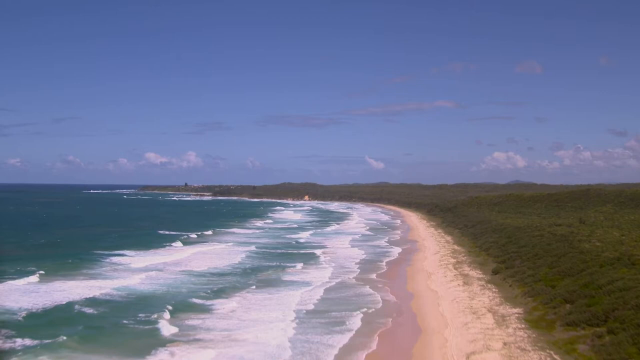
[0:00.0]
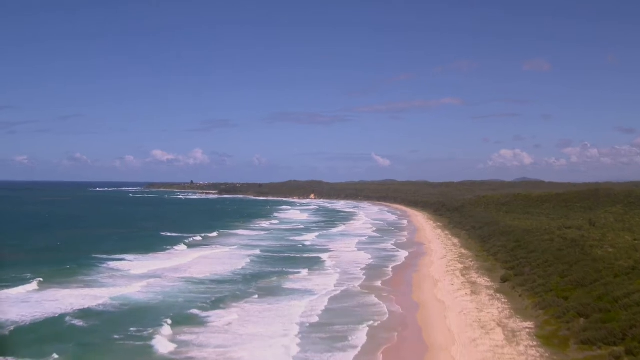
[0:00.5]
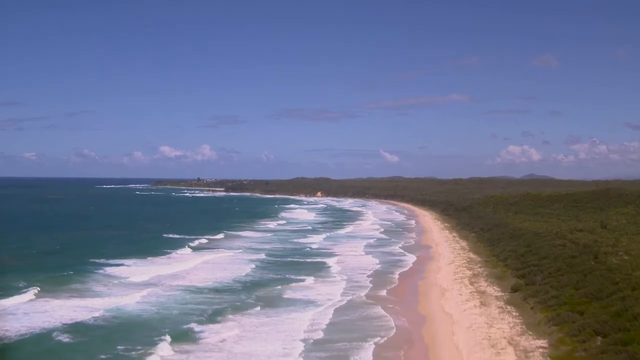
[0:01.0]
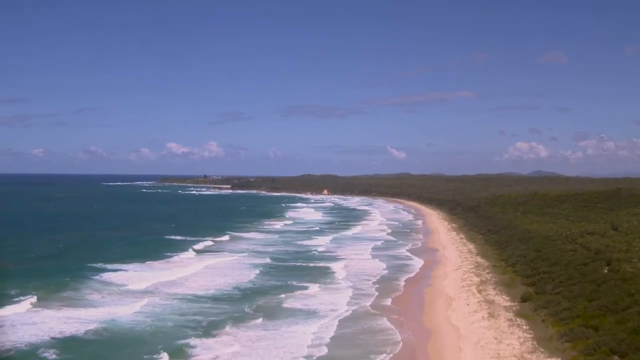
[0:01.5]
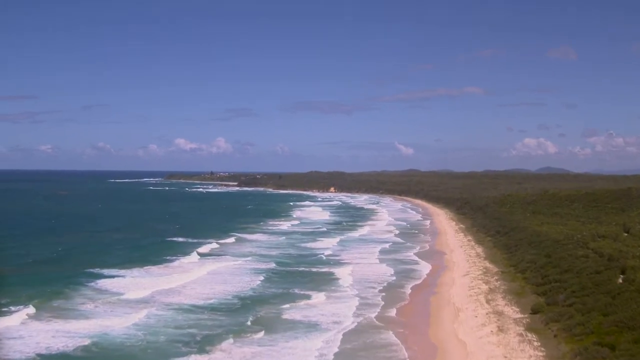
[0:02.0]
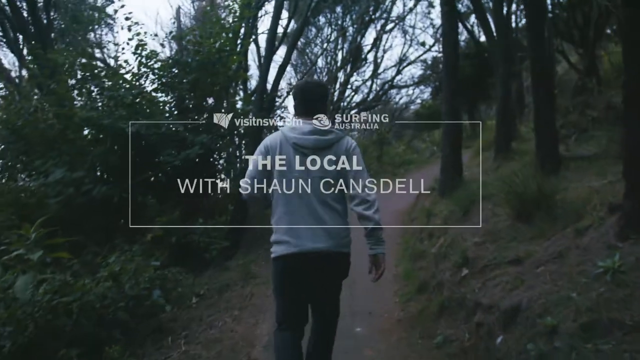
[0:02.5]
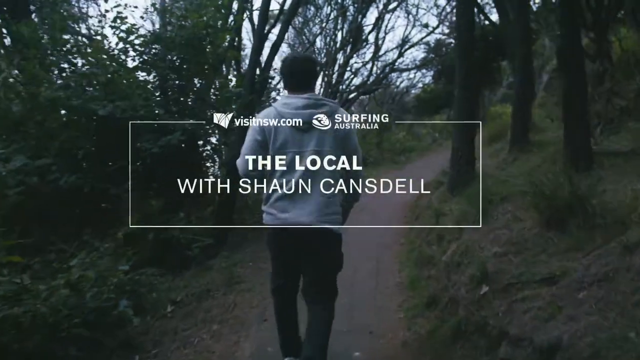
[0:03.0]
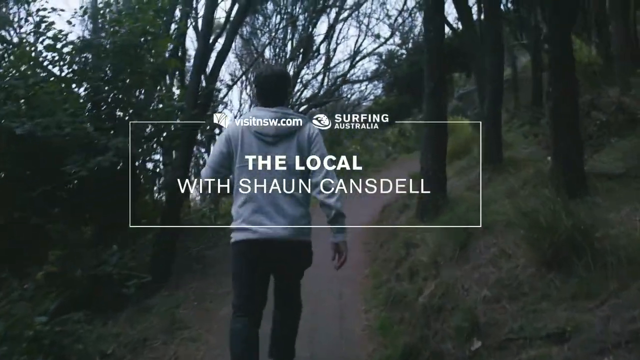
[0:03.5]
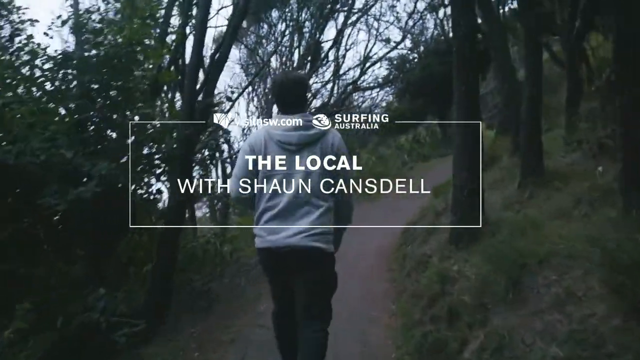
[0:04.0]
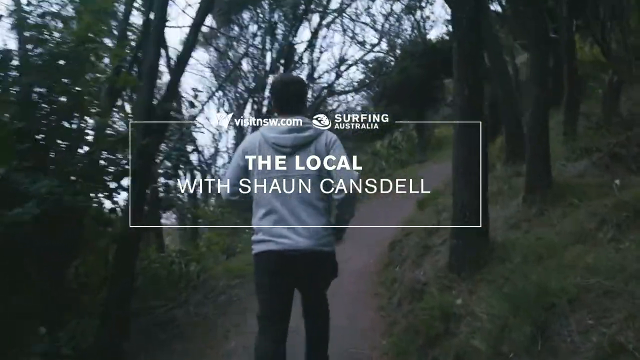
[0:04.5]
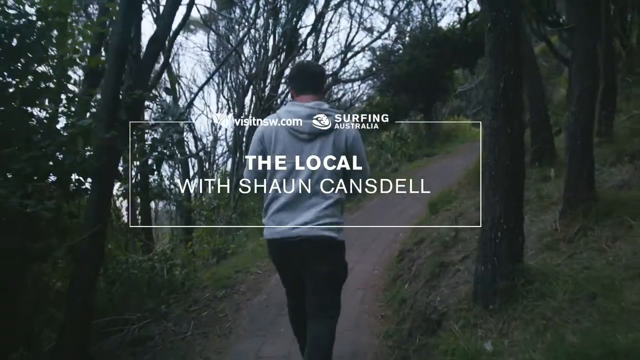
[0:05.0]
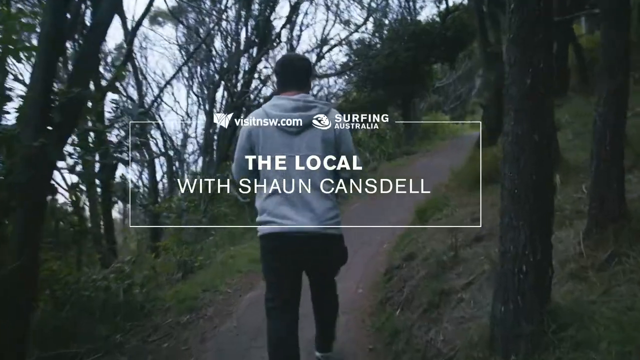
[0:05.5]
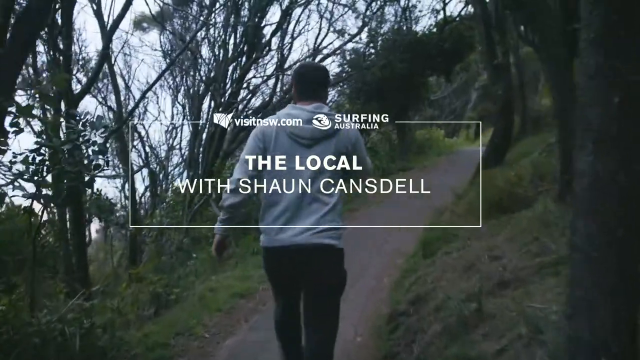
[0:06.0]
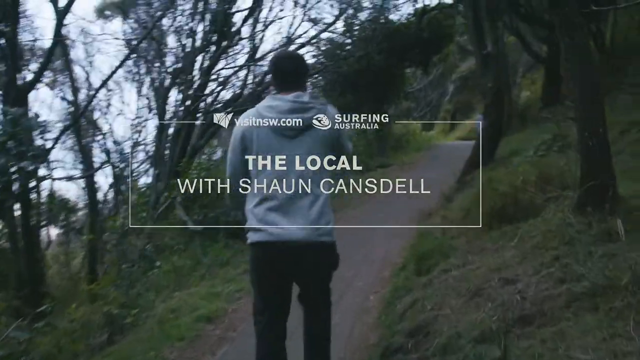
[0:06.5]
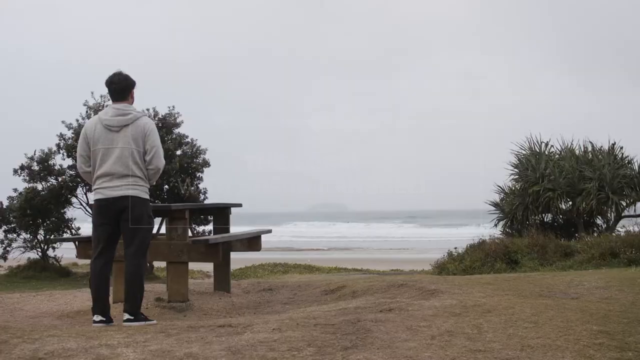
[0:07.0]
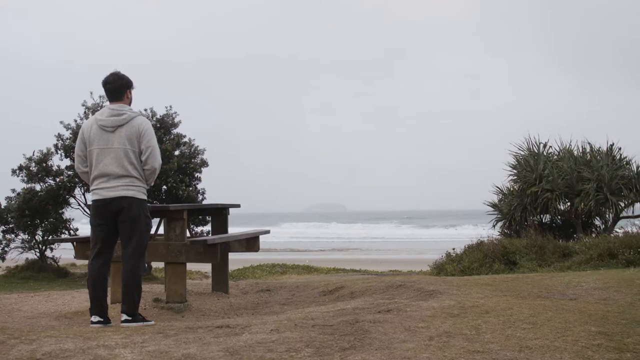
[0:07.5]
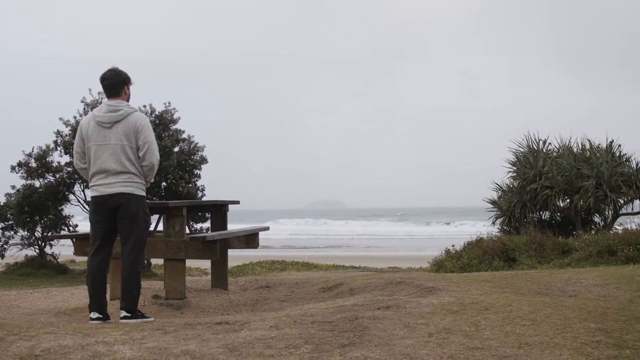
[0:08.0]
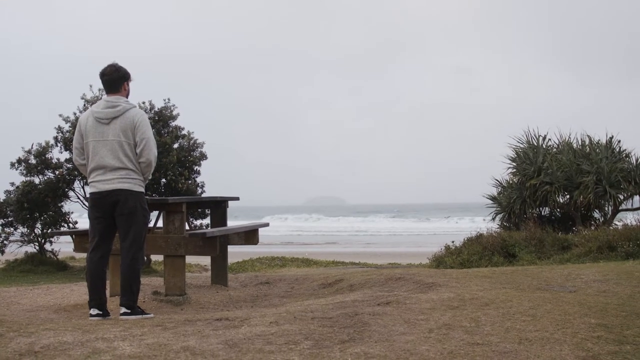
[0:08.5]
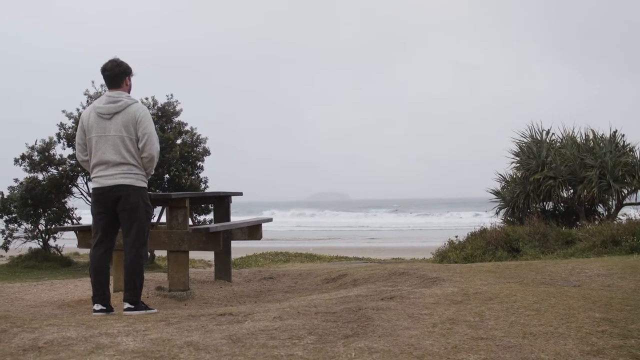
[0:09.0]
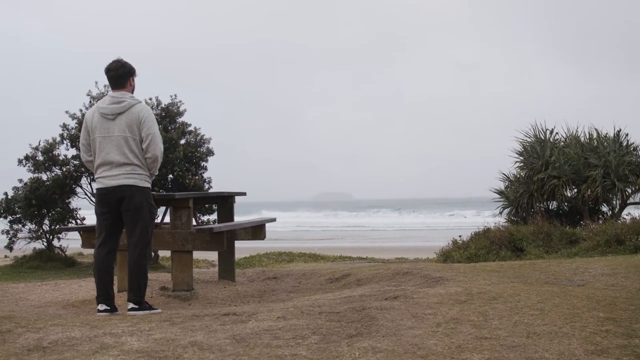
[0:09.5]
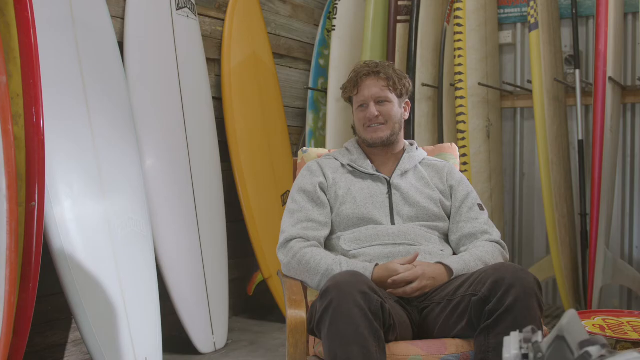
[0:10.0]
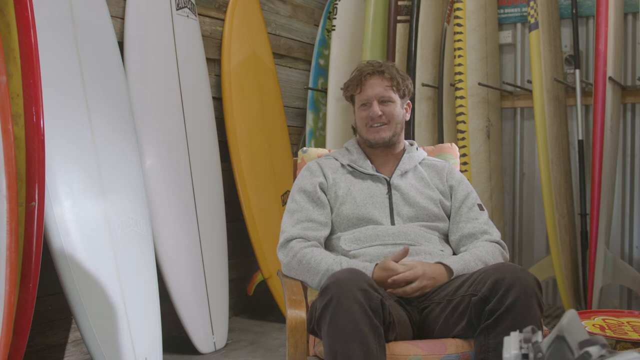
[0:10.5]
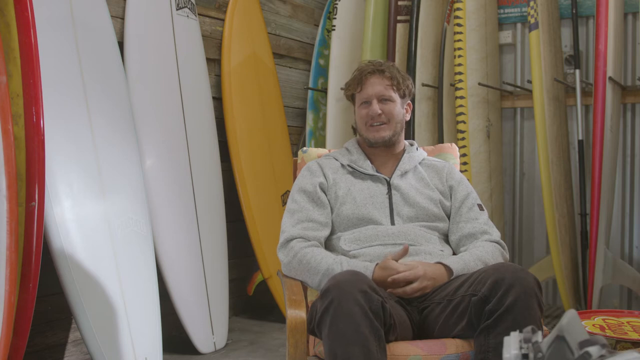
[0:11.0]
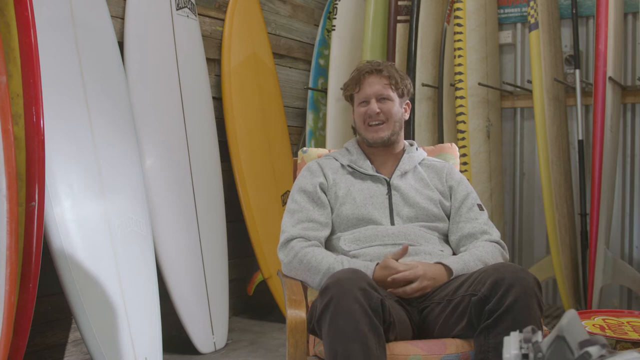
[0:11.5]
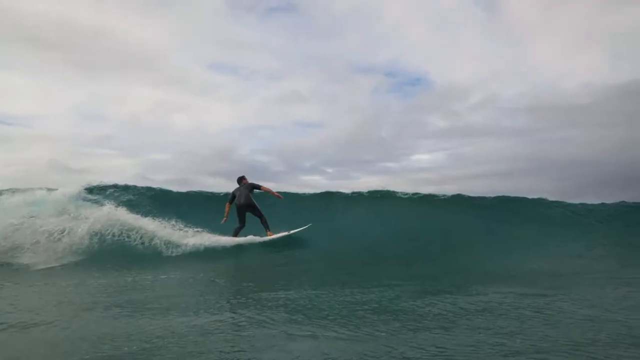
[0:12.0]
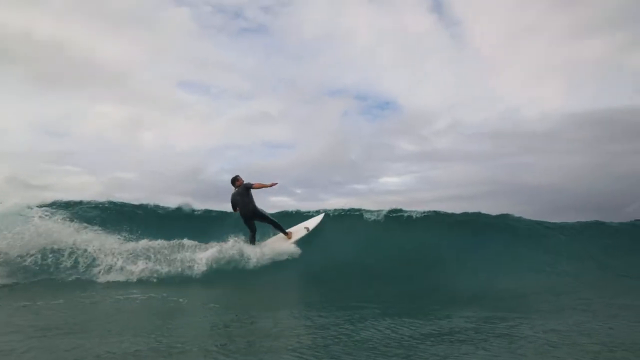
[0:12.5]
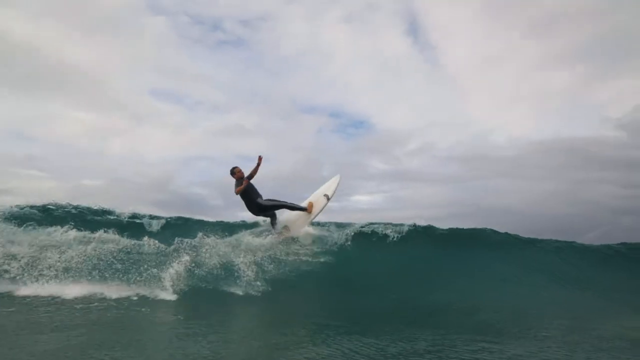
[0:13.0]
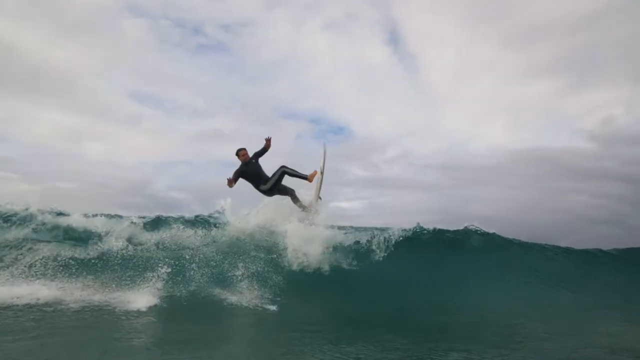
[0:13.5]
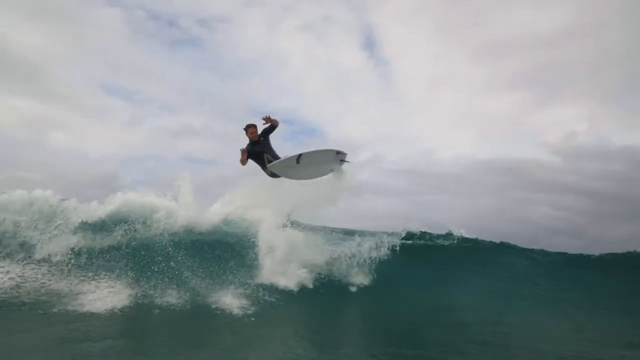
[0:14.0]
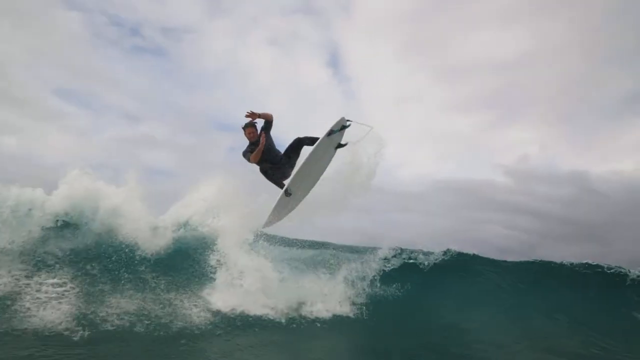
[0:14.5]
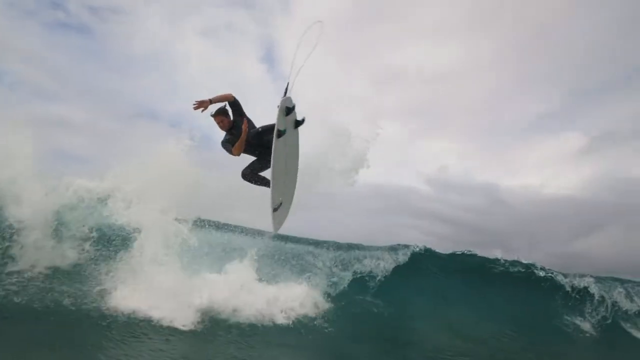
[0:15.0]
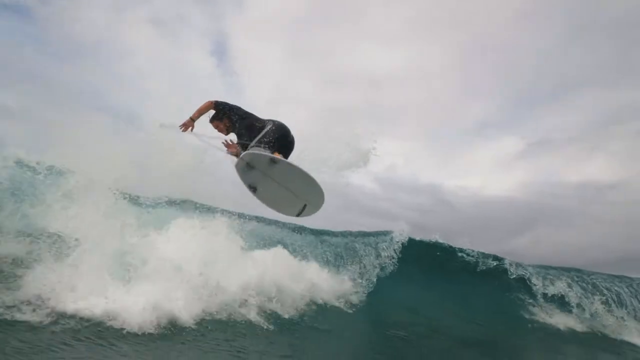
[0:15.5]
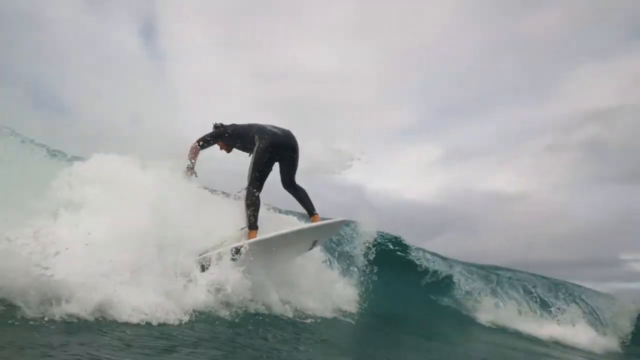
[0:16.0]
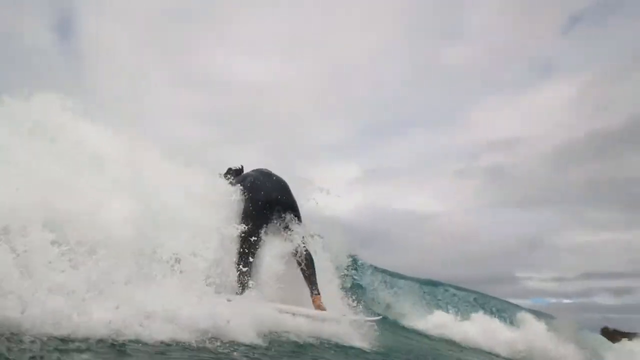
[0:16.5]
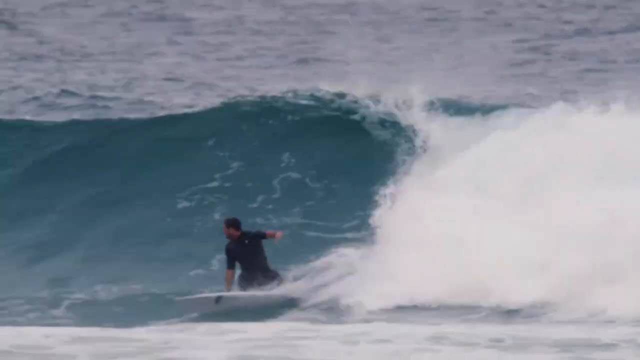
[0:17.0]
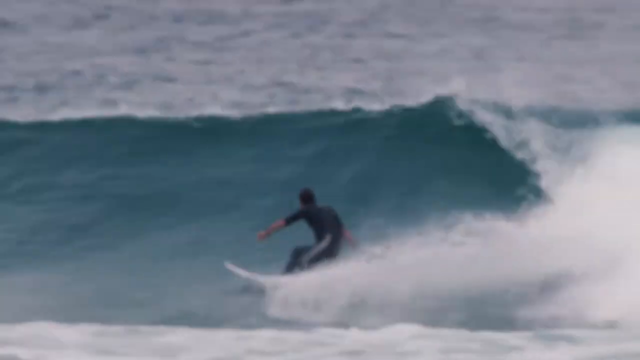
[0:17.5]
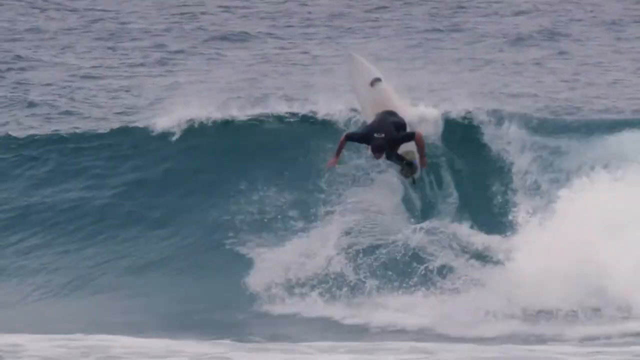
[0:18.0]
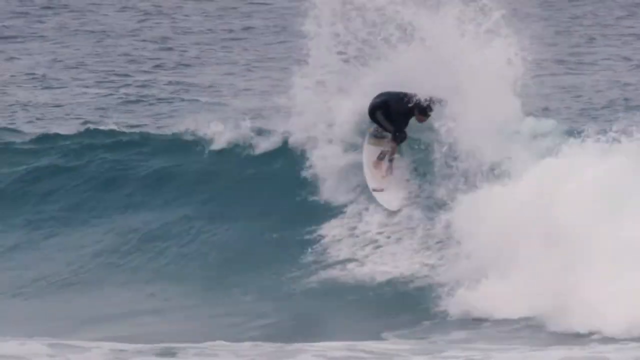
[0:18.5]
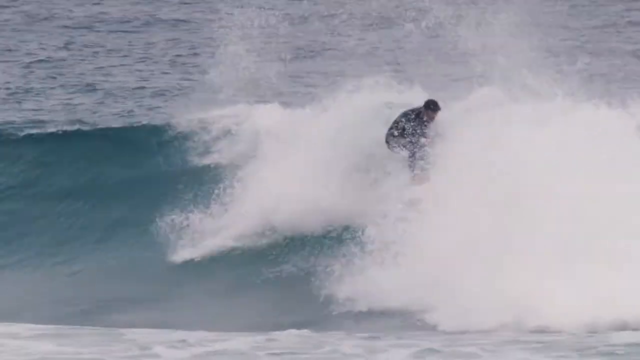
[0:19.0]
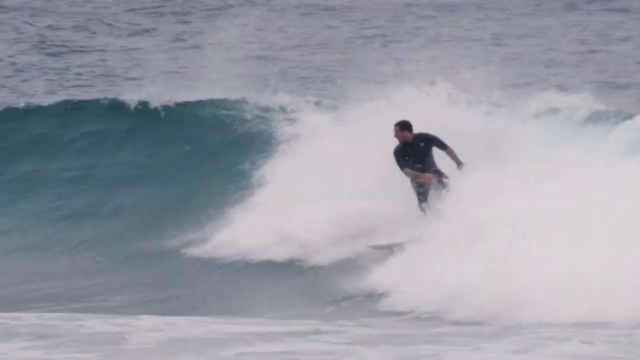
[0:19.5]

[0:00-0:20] An aerial view shows a hilly landscape, then a fairly narrow beach with waves lapping on it. The area looks rural: there seems to be no one on the beach and there are no buildings. The water is a kind of turquoise color and clearly appears to be the ocean, and the sky is blue with just a couple of clouds. The scene changes to a man walking on a path, possibly in the woods, with the text "the local with Sean Cansell". He is probably in his 20s or 30s, with brown hair, and wears a gray hoodie, pants and tennis shoes. He then appears to be at a lookout spot near the beach area, where there is some sand, a wooden picnic bench in the sand and a couple of small bushes. Next he is sitting in a chair in a gray zip-up hoodie, his brown curly hair probably a few inches long and his hands tucked together, next to a wall propped up with surfboards. A picture follows of what looks to be a man surfing on a white surfboard in a wetsuit.